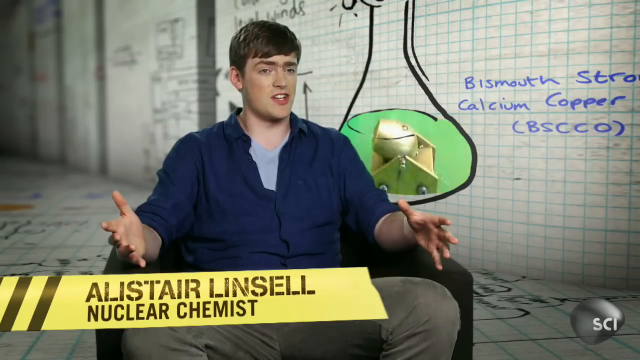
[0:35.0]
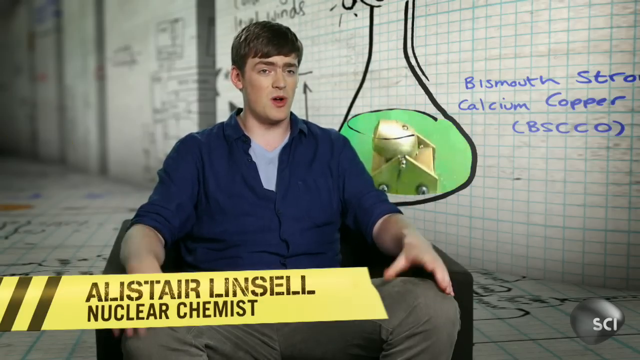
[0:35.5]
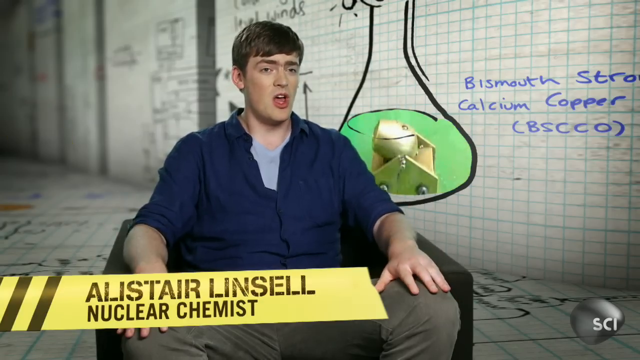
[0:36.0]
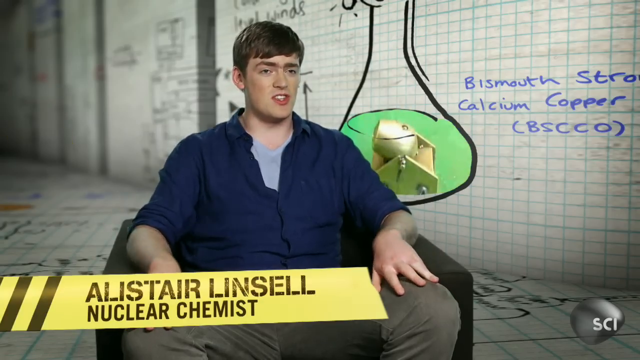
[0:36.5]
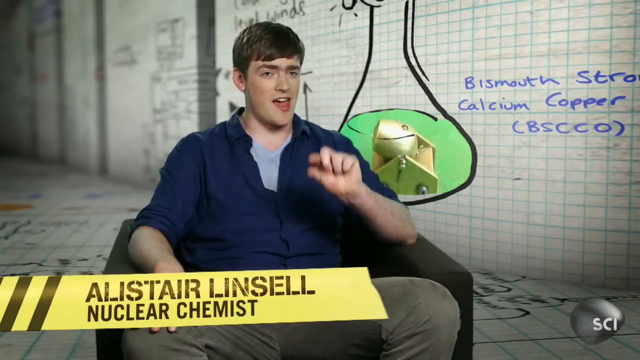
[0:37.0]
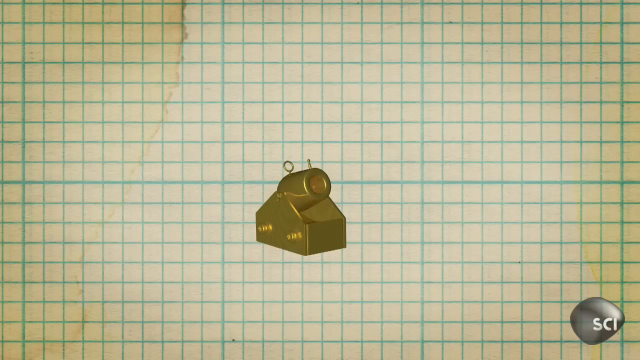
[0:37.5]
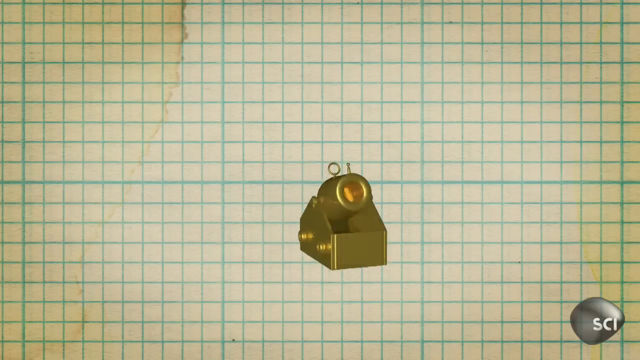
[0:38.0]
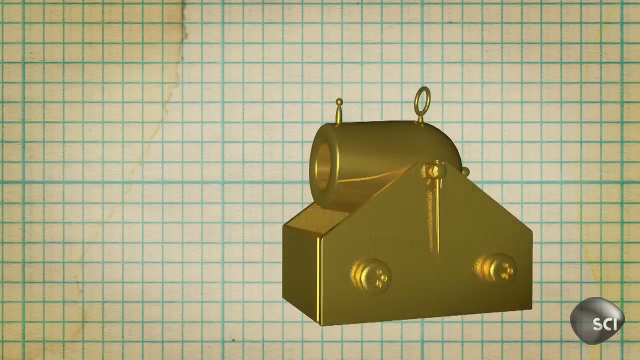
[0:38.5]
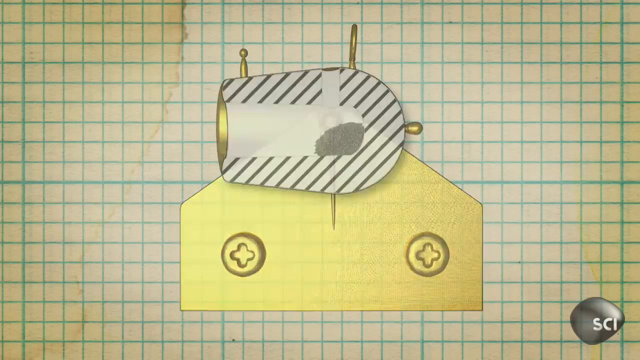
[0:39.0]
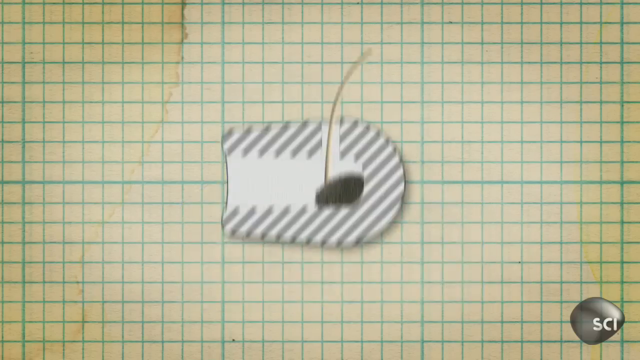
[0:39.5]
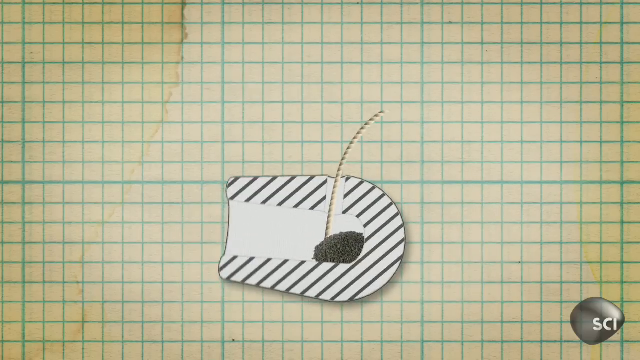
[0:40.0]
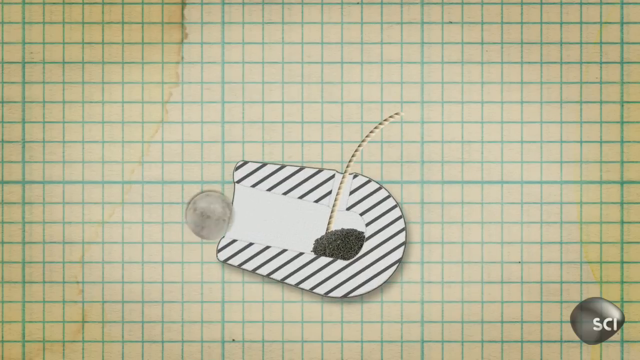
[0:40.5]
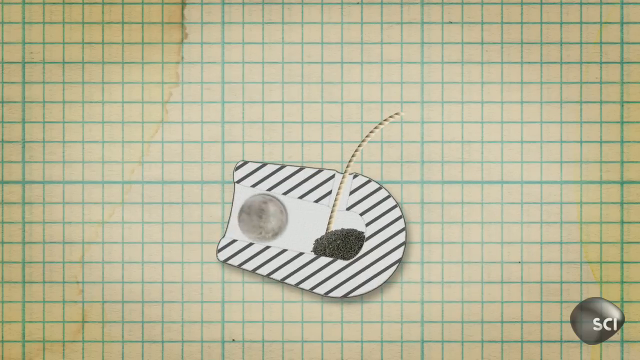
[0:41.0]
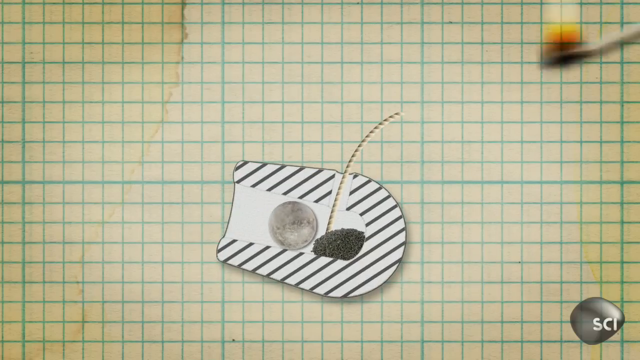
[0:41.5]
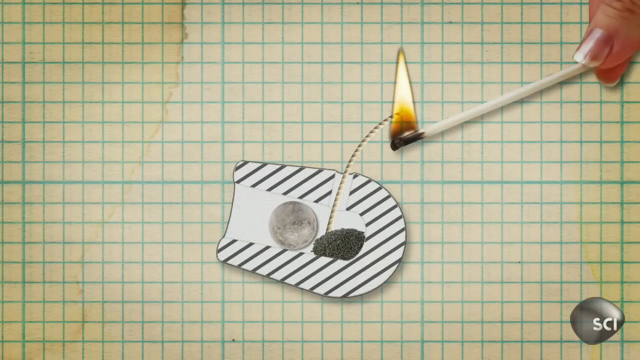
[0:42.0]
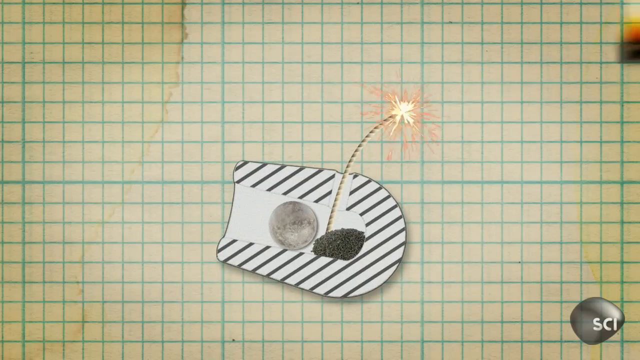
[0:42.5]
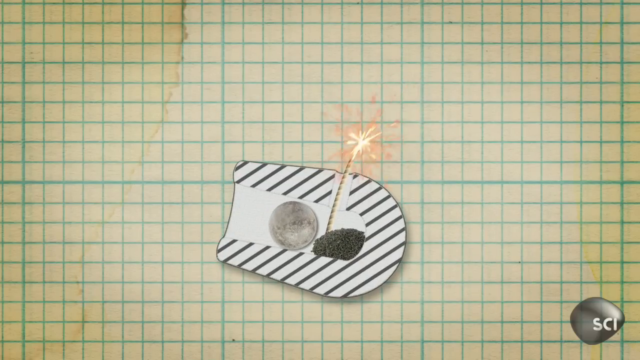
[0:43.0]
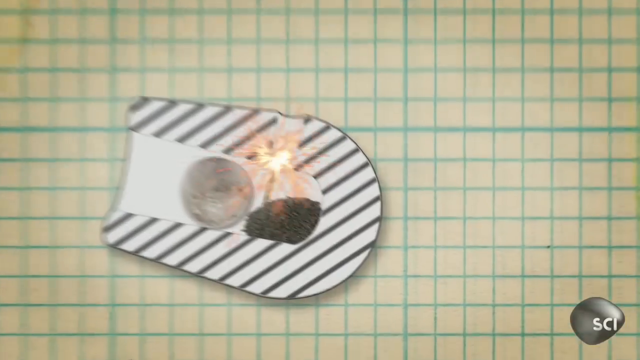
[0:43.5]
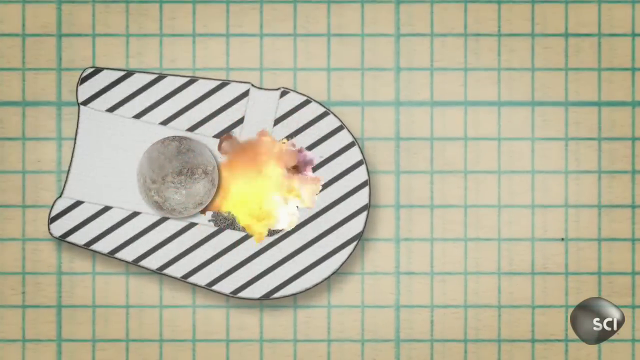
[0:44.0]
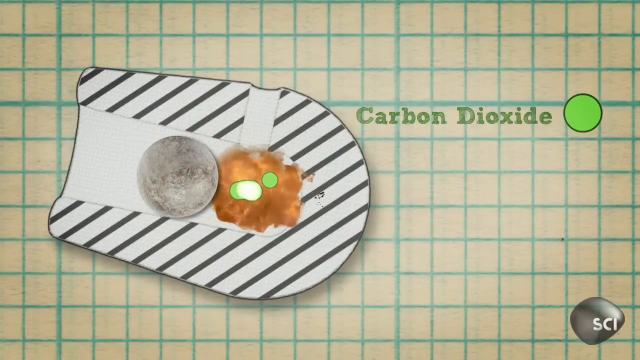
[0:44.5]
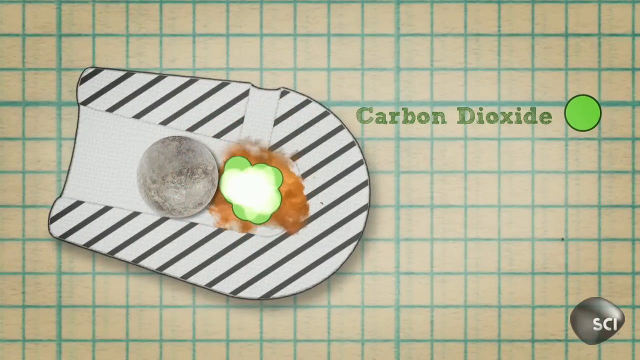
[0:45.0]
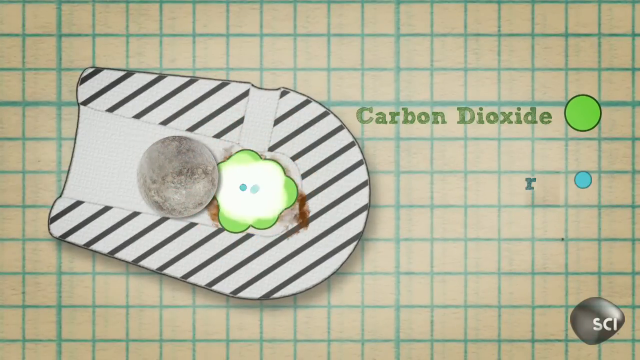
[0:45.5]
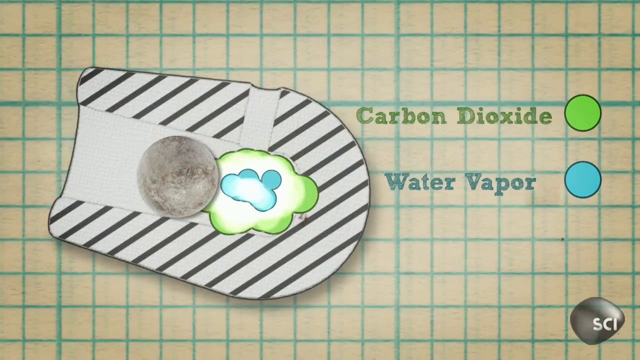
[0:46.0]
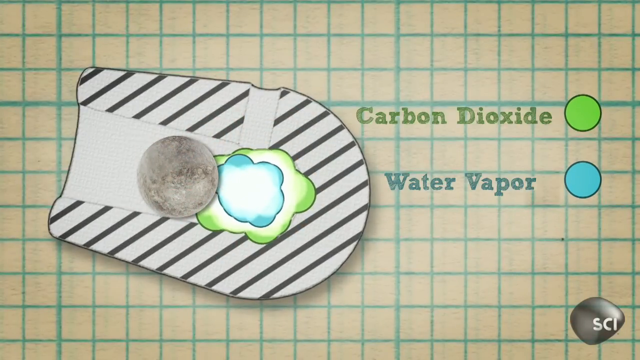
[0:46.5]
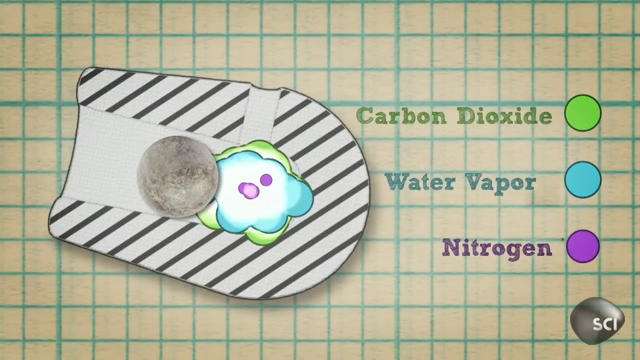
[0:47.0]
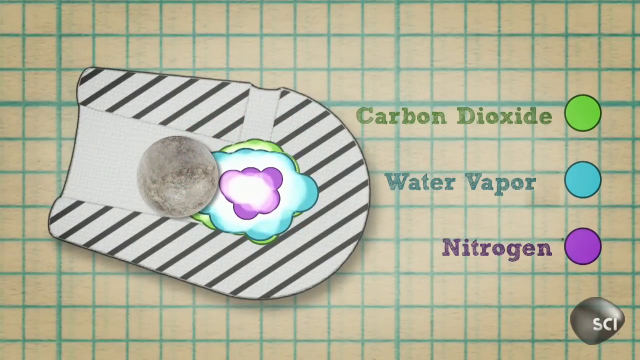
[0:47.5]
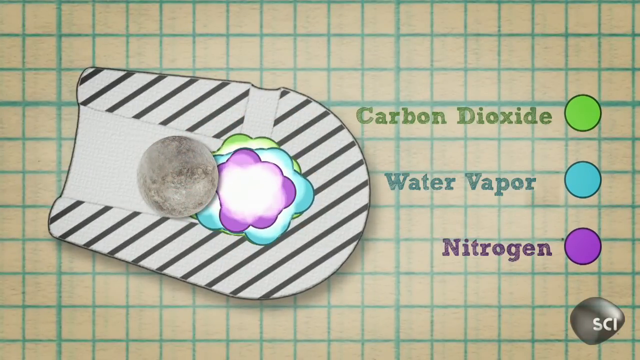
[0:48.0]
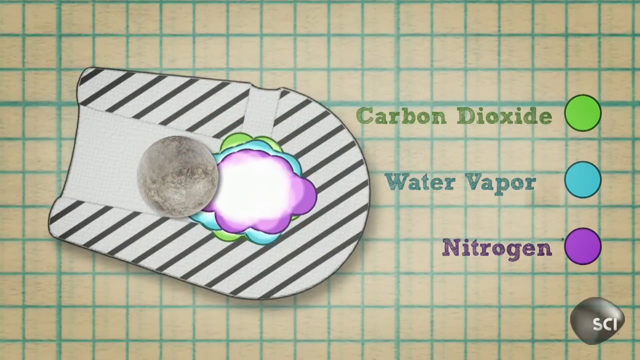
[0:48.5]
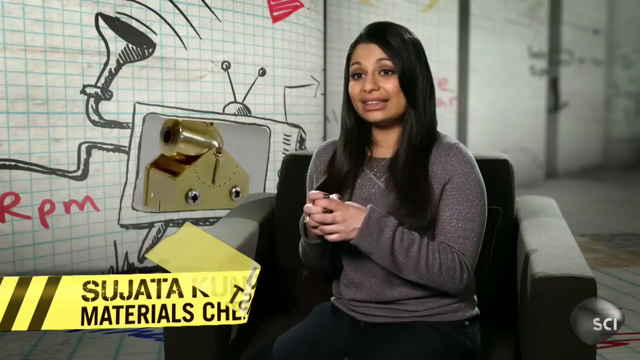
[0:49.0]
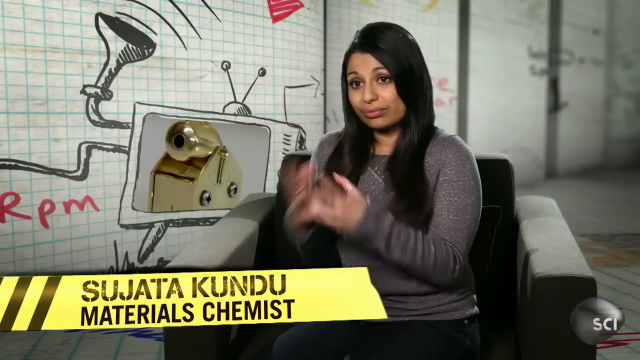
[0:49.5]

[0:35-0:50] The guy in the blue shirt is interviewed. A close-up shows what the inside of the cannon looks like when it is lit and how it expels the ball. There seems to be some gunpowder or something similar at the bottom, and the text reads "carbon dioxide, water vapor and nitrogen". A woman talks for about a second, then the man in the blue shirt is interviewed again. A diagram of sort of the inside of the cannon appears, the woman talks, and the diagram shows the material inside kind of boiling over, while the ball in the diagram does not move.